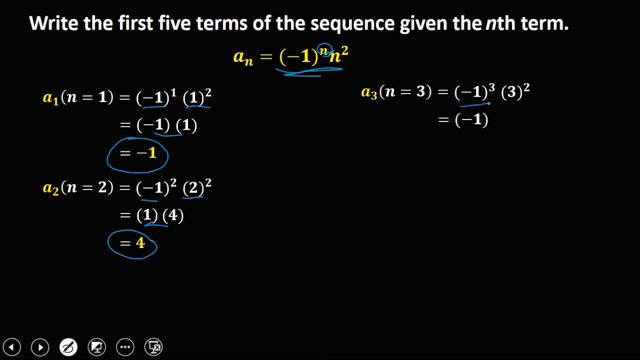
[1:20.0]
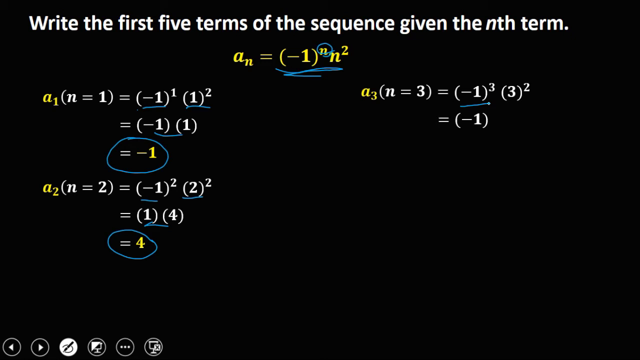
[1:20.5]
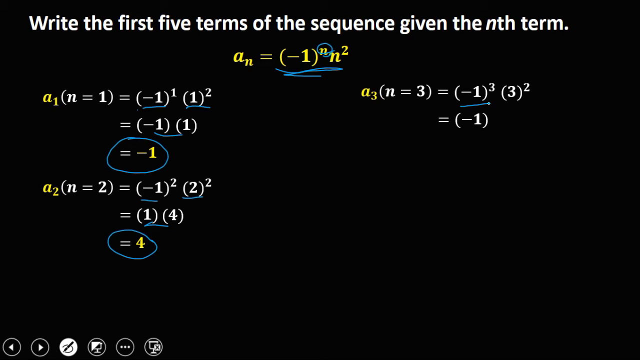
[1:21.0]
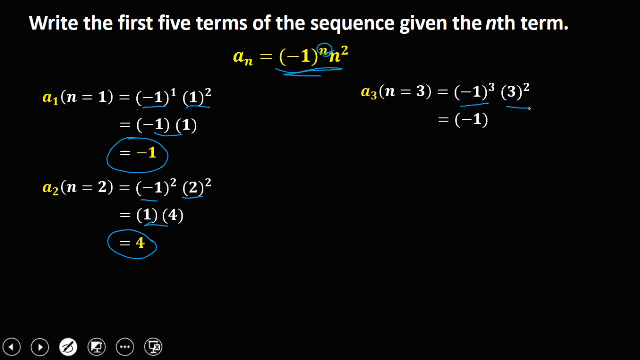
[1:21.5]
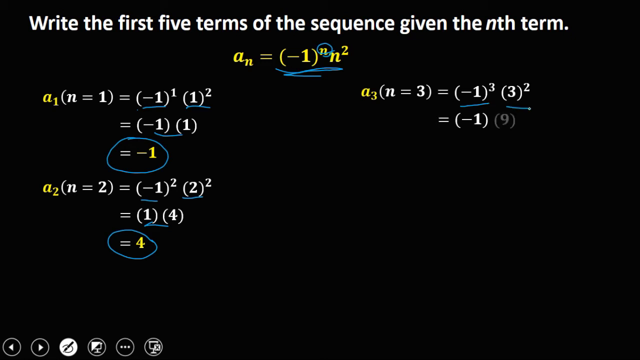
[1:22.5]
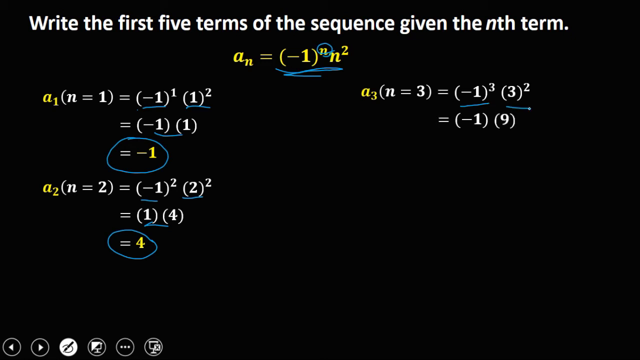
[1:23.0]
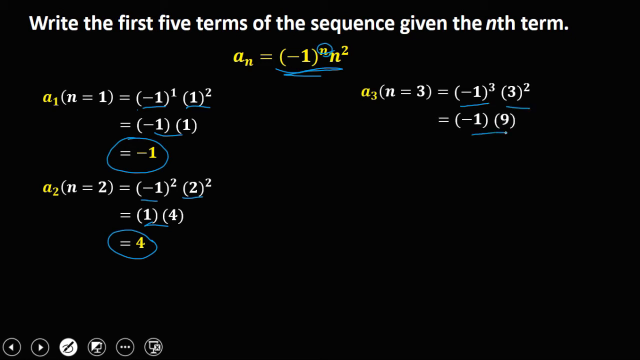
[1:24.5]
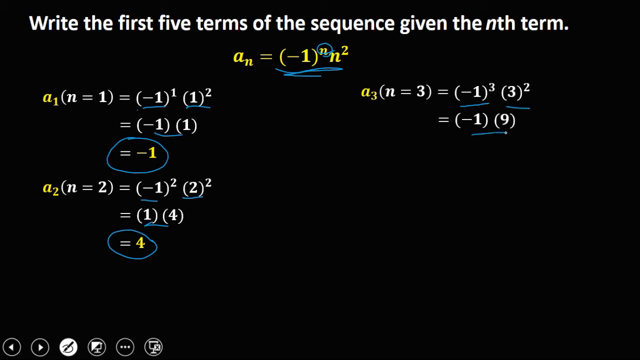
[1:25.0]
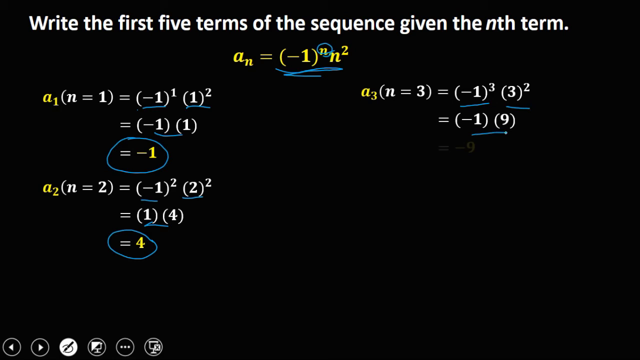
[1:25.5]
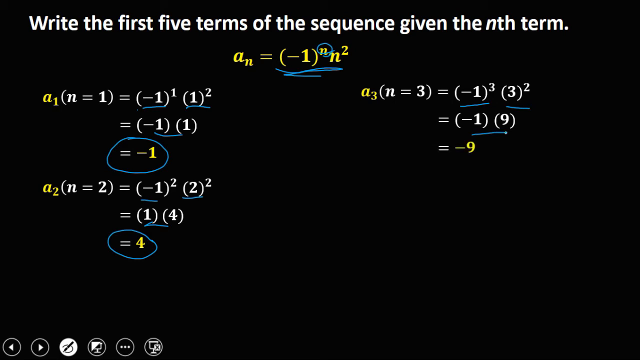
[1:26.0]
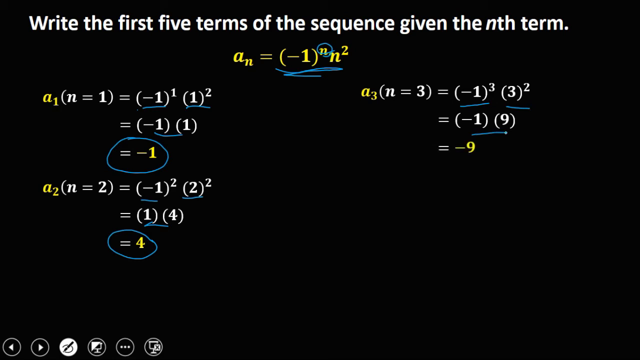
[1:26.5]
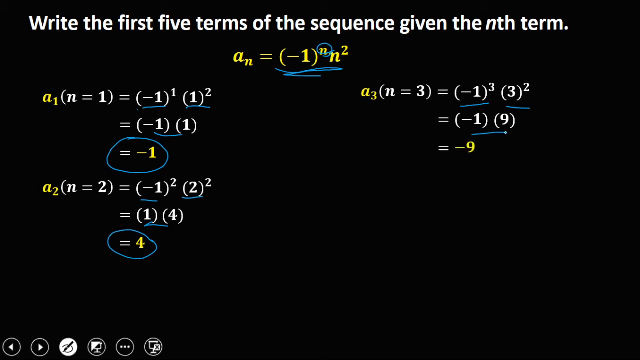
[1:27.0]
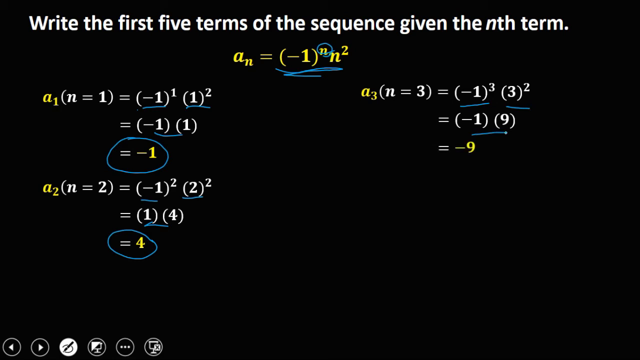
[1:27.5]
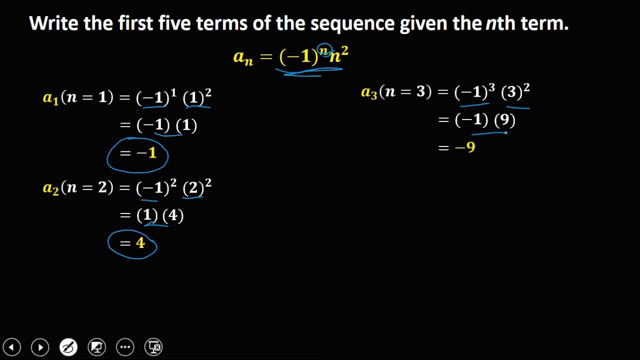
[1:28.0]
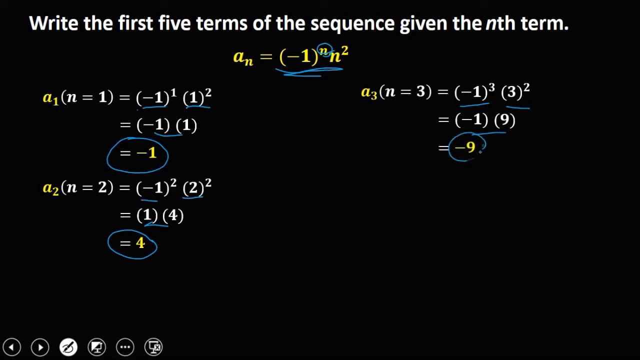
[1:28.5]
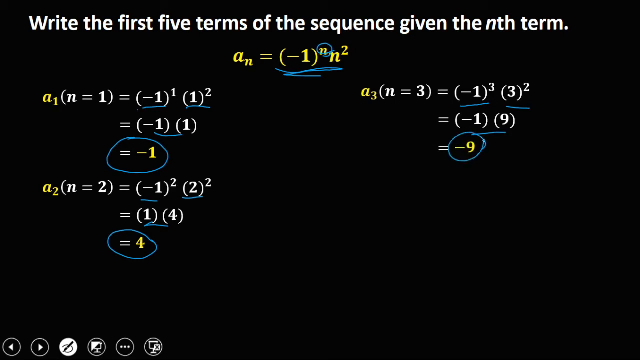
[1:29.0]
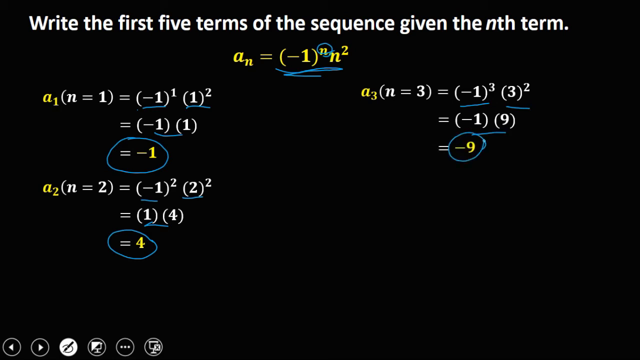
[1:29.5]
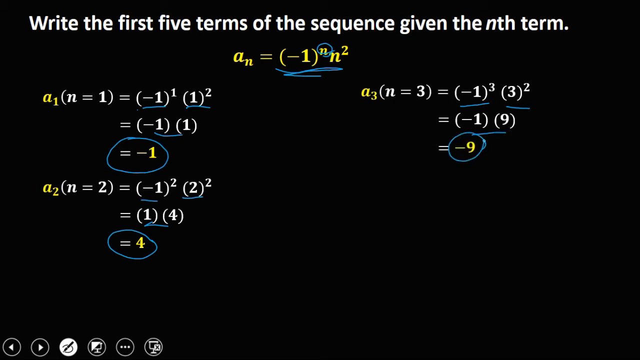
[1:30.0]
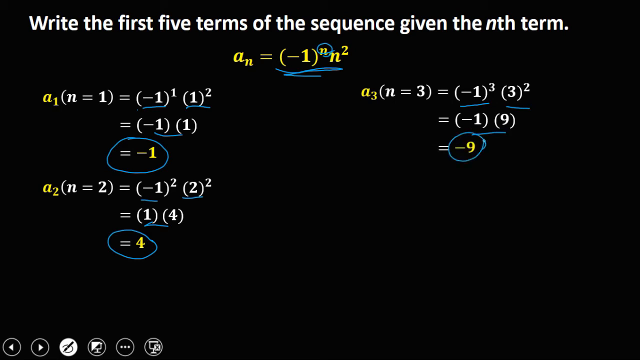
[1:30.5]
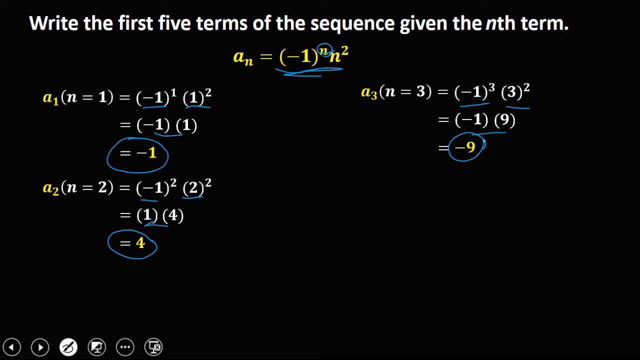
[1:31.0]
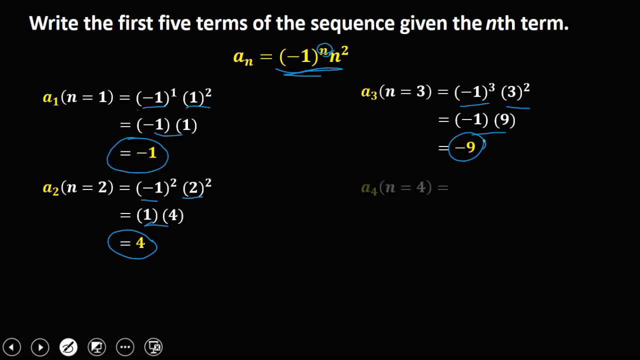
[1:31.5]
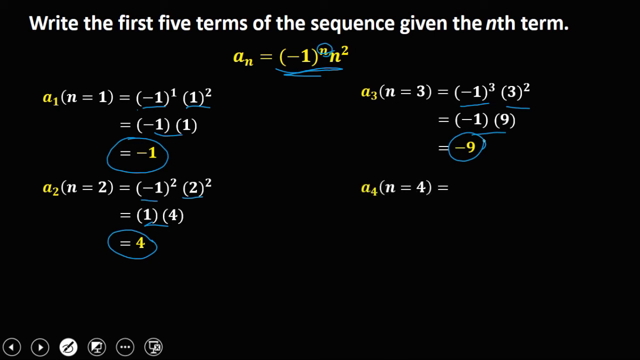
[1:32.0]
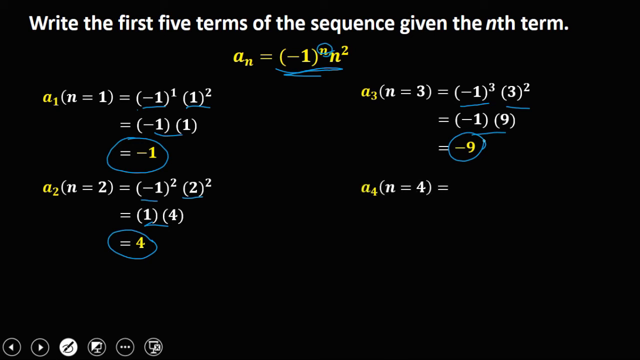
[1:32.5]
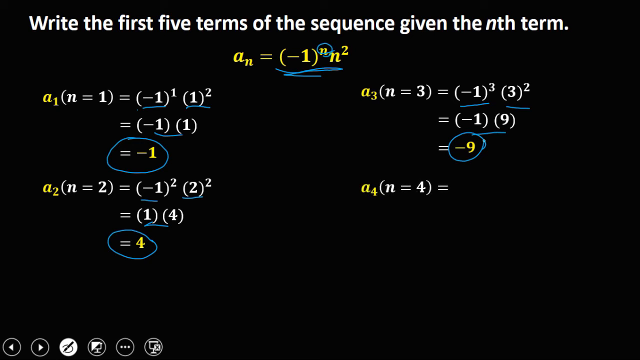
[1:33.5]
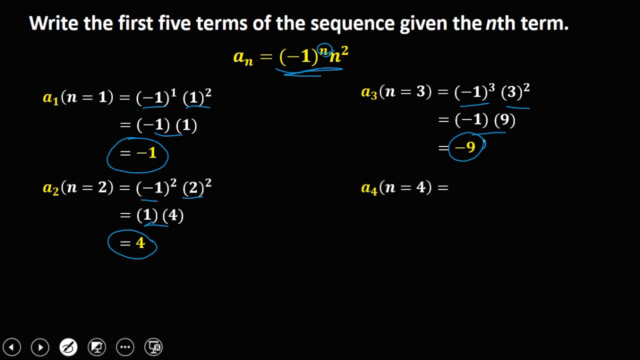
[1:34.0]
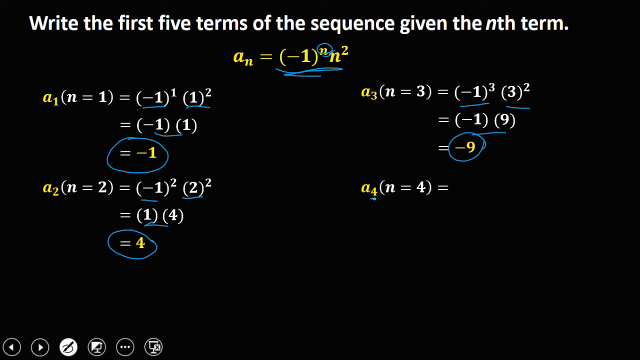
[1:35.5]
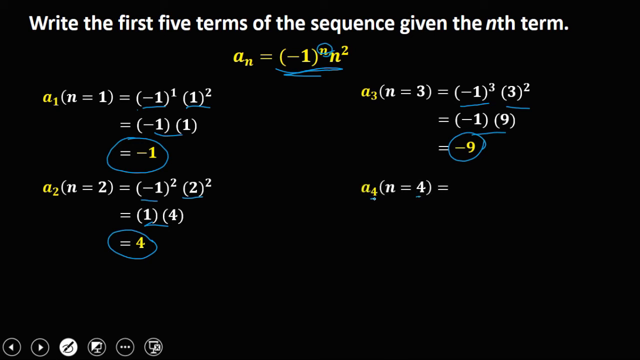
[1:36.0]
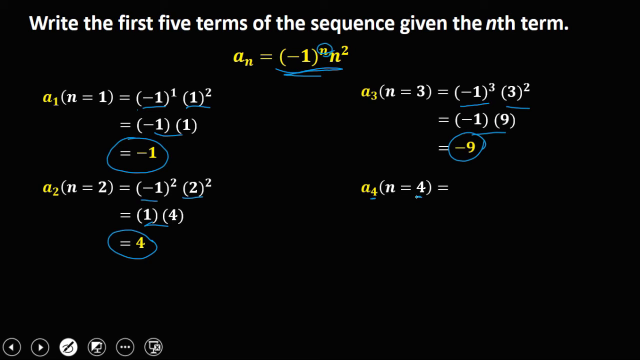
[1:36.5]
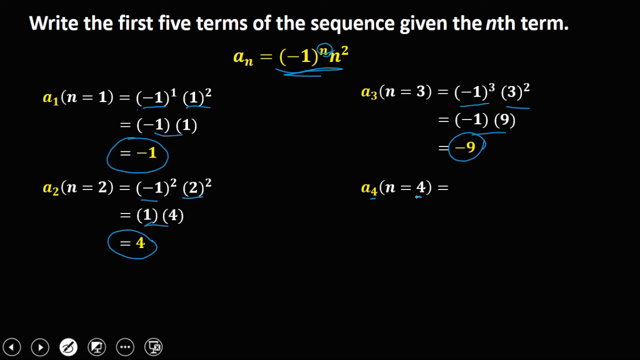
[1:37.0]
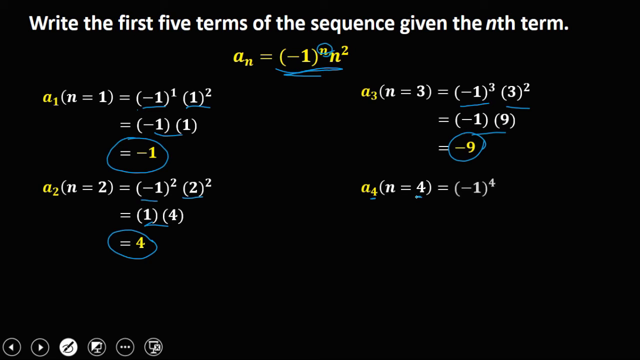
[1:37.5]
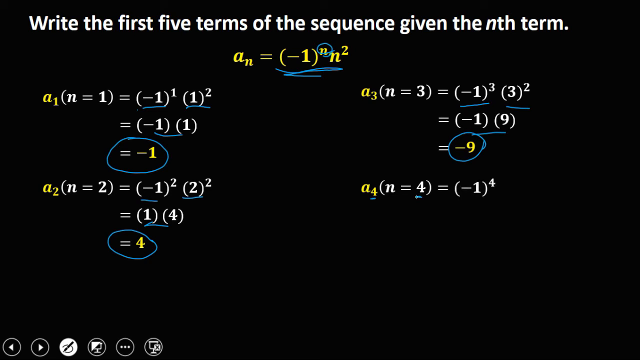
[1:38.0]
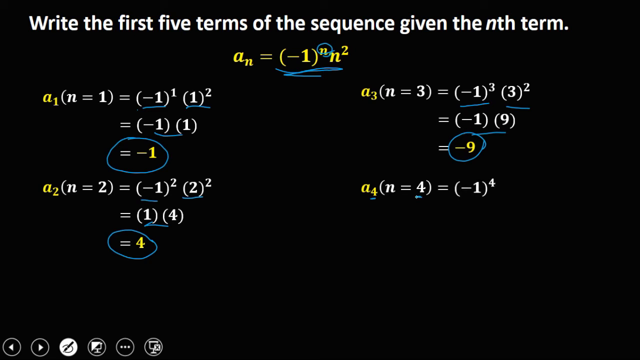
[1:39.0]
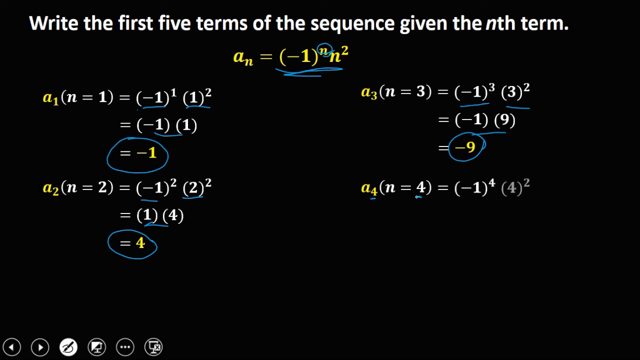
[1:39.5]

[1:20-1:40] The tutorial solves for a subscript 3 (n = 3), the third term, using the same rule. It equals negative 1 to the third power multiplied by 3 squared. Negative 1 cubed is negative 1 times negative 1 times negative 1, and a negative to an odd power stays negative, so it is negative 1. This gives negative 1 multiplied by 9, yielding the answer negative 9.